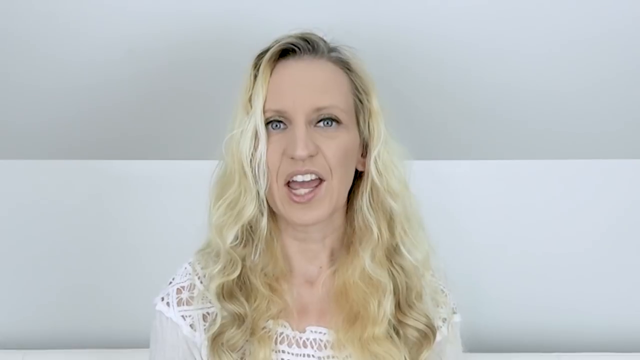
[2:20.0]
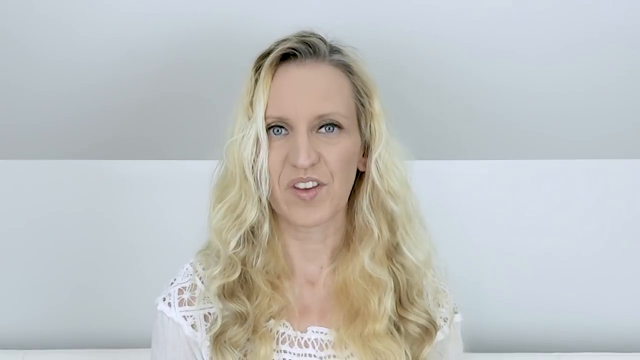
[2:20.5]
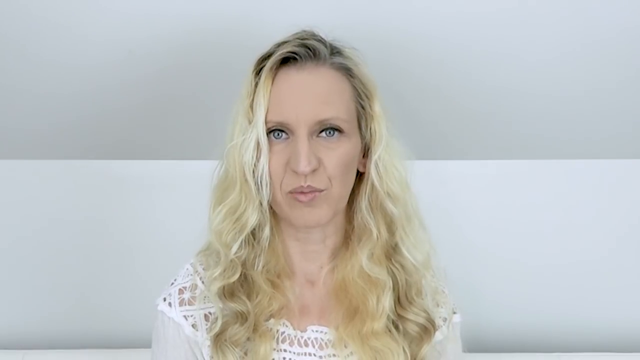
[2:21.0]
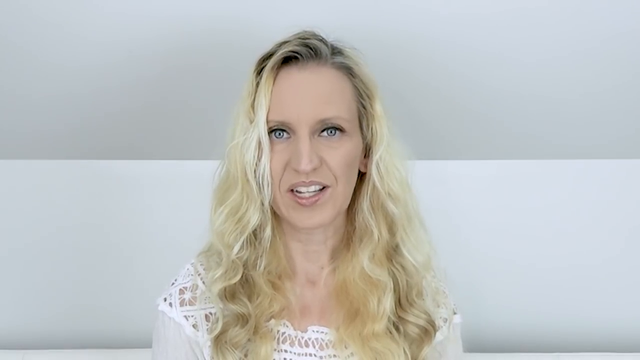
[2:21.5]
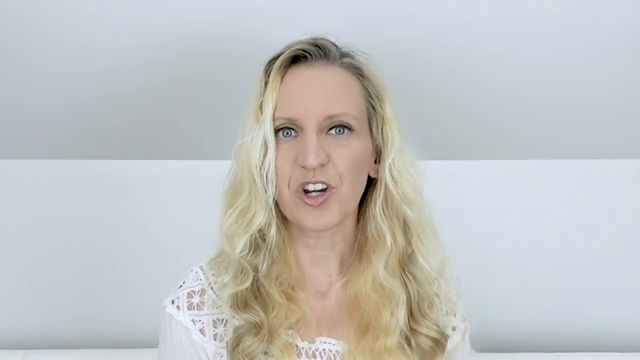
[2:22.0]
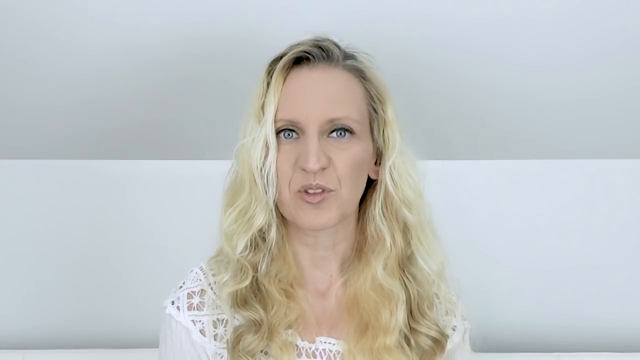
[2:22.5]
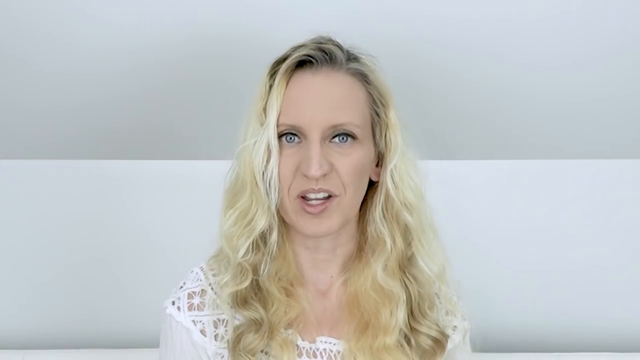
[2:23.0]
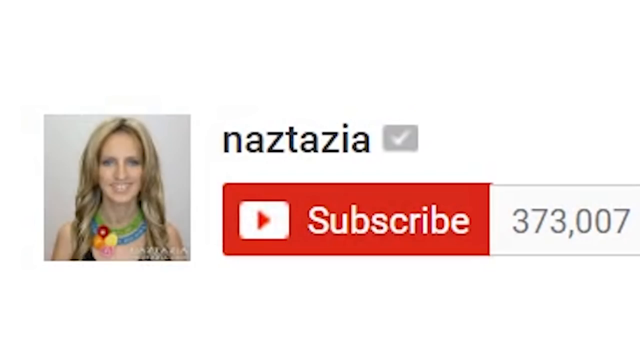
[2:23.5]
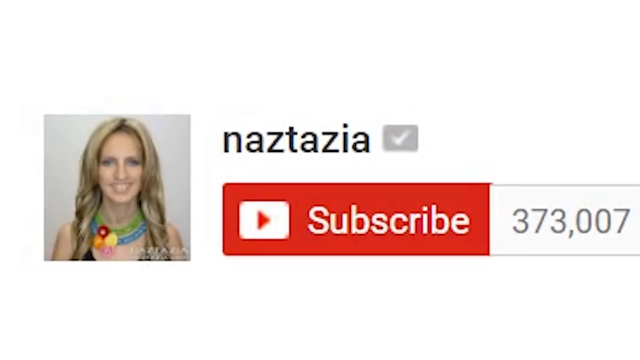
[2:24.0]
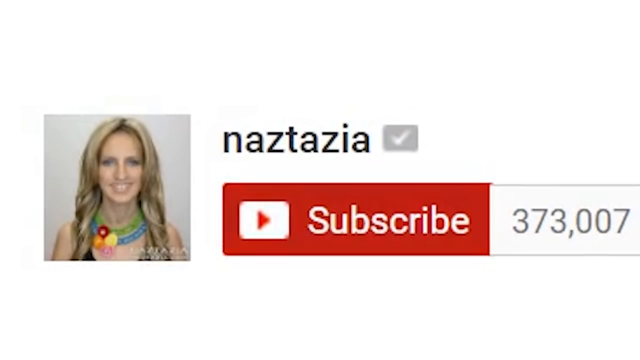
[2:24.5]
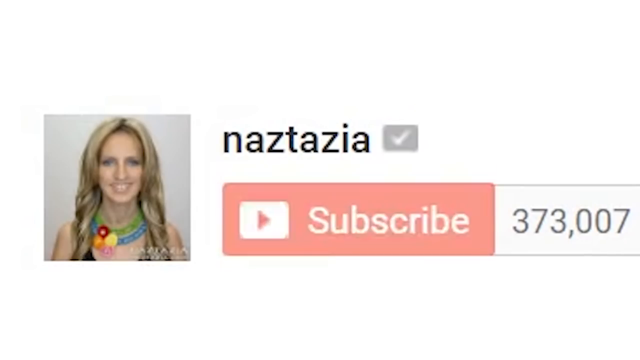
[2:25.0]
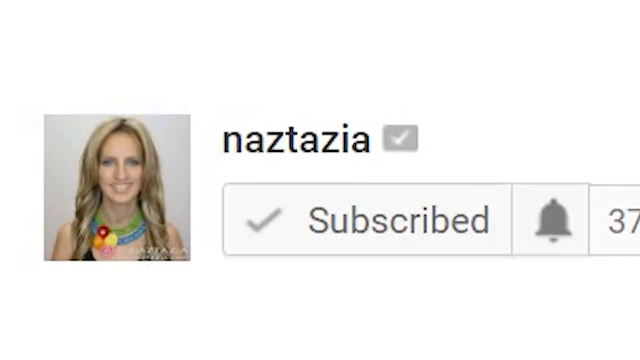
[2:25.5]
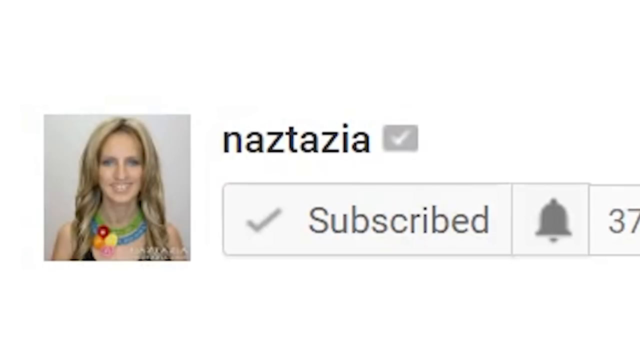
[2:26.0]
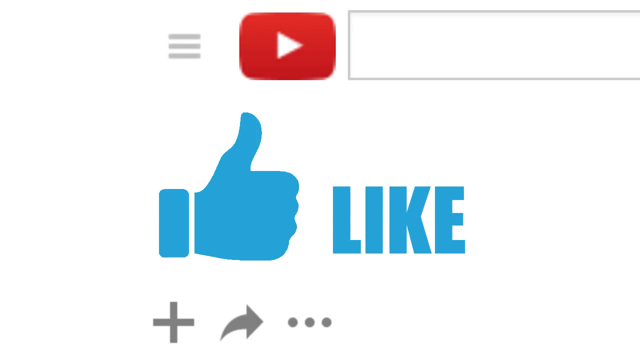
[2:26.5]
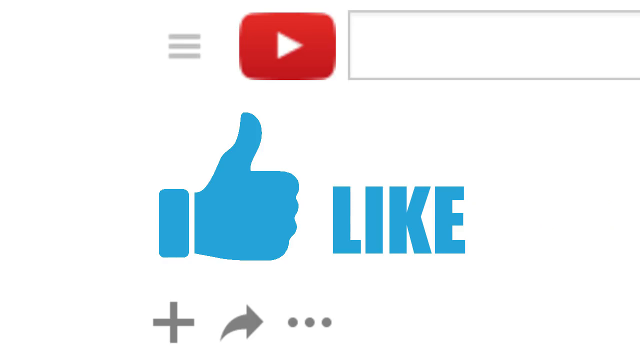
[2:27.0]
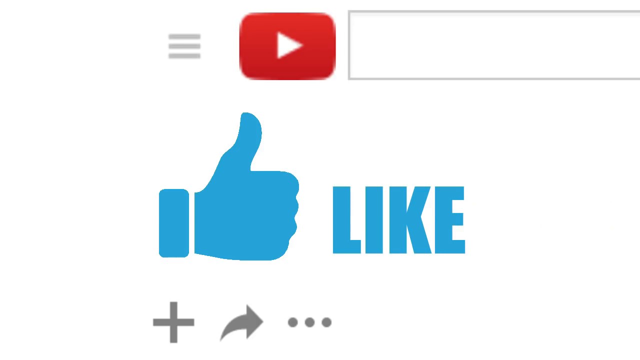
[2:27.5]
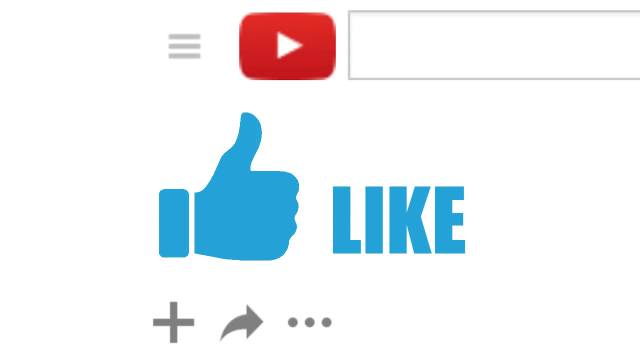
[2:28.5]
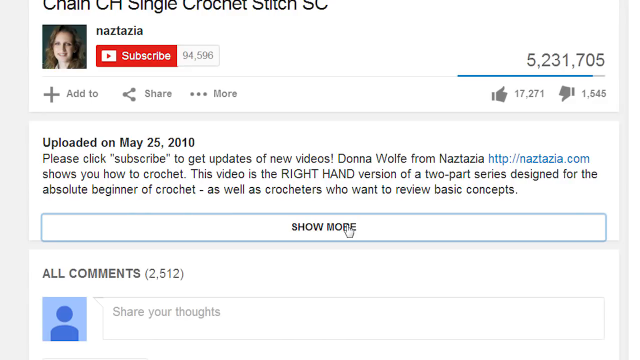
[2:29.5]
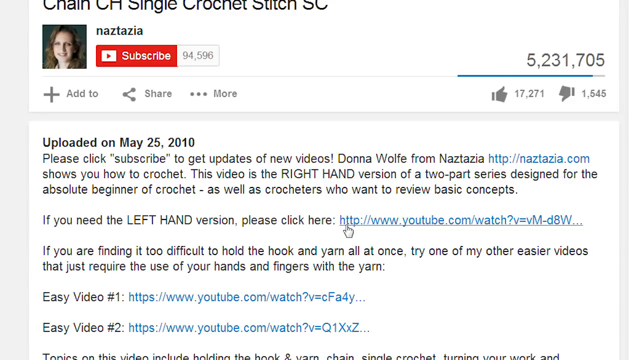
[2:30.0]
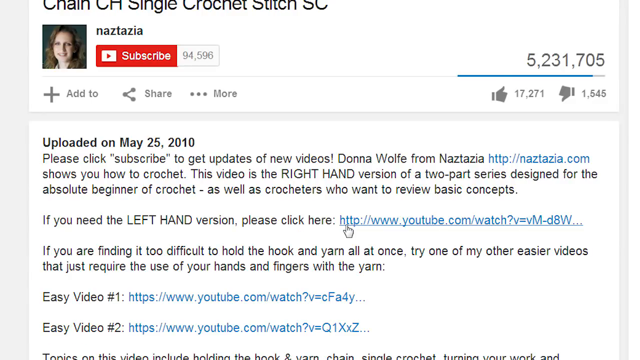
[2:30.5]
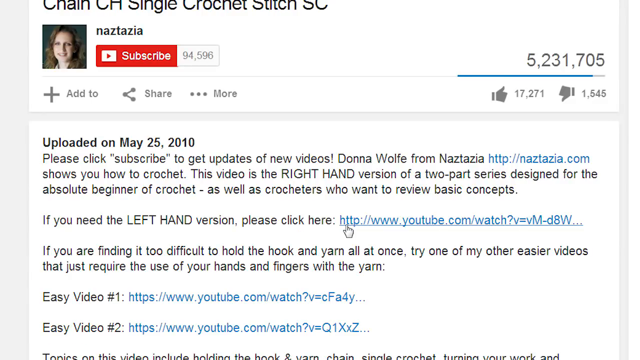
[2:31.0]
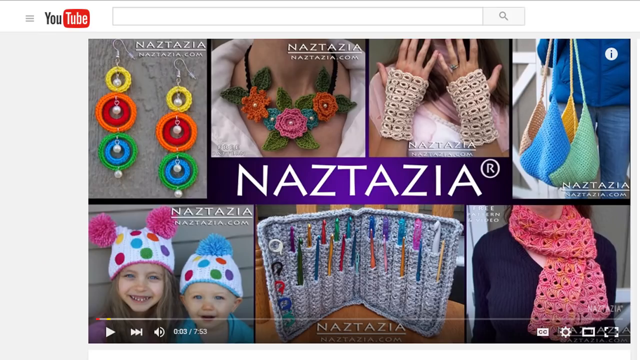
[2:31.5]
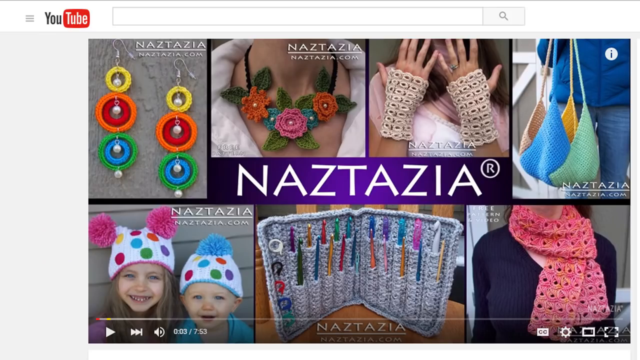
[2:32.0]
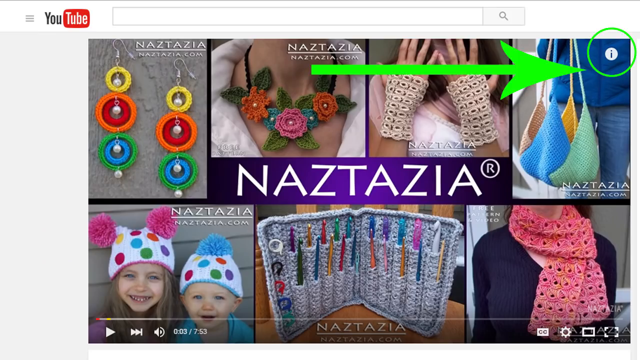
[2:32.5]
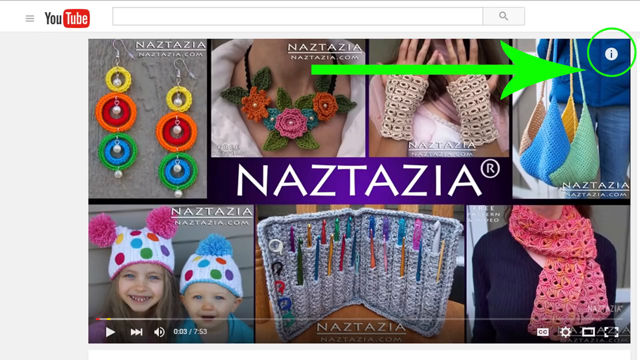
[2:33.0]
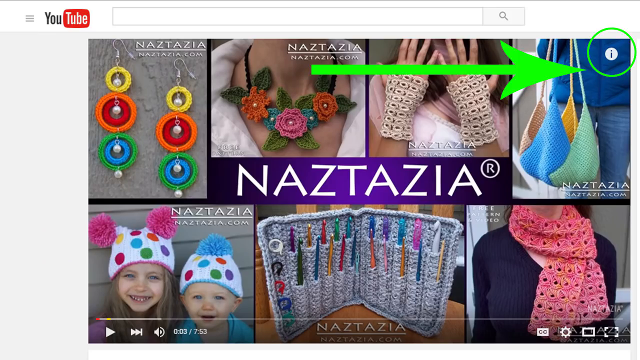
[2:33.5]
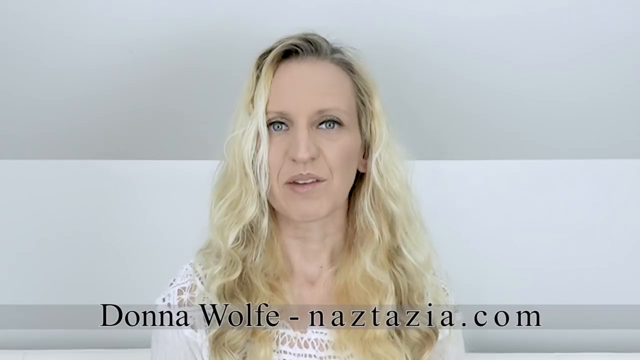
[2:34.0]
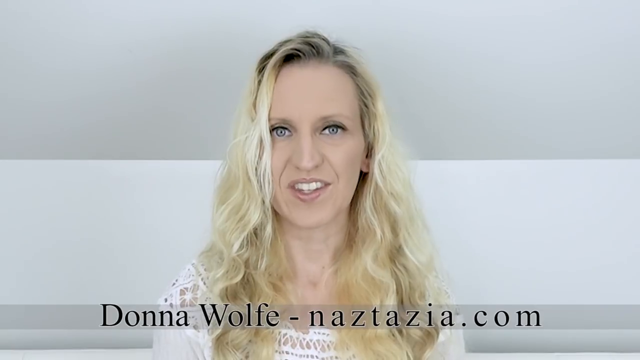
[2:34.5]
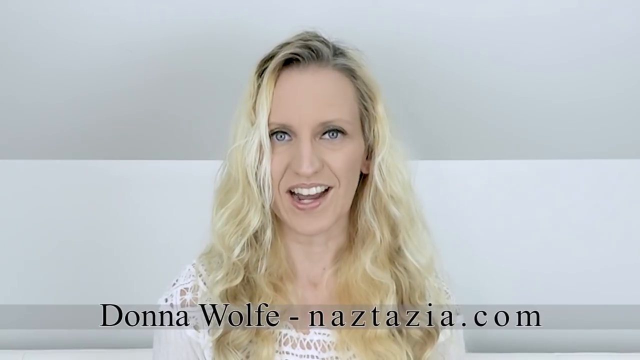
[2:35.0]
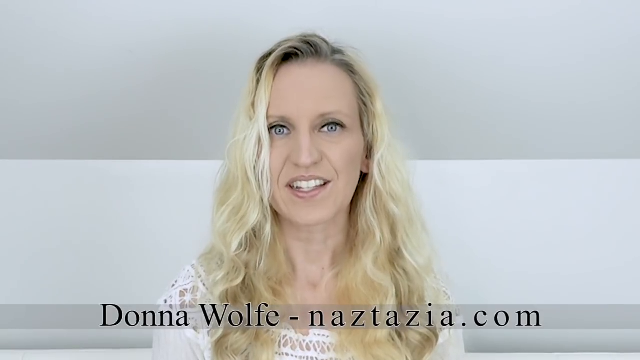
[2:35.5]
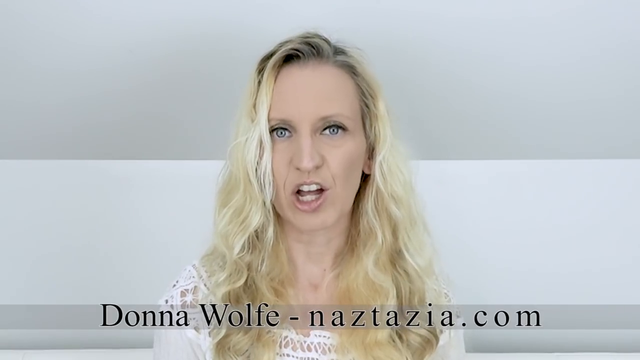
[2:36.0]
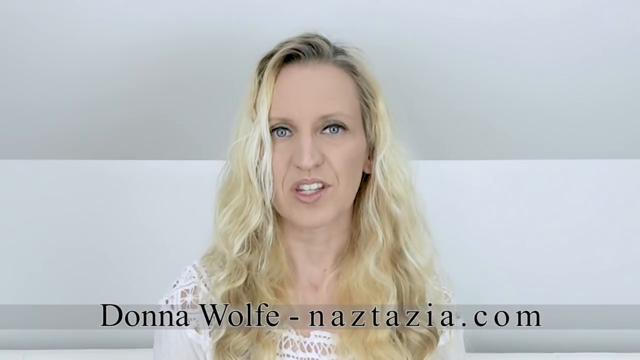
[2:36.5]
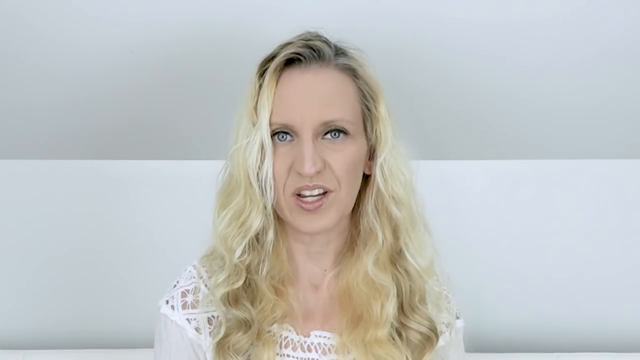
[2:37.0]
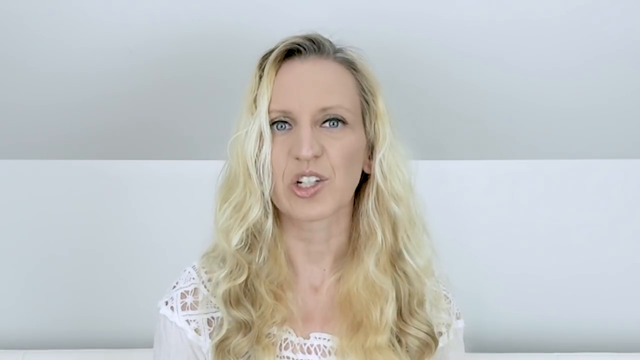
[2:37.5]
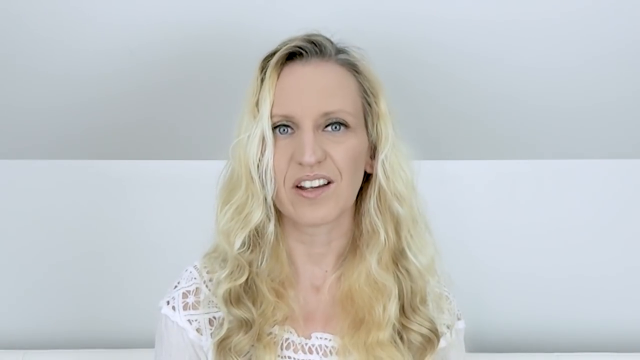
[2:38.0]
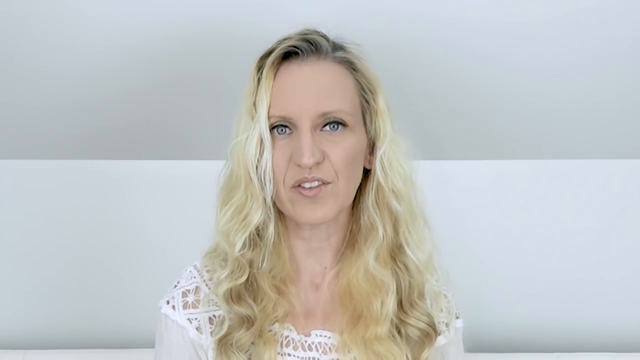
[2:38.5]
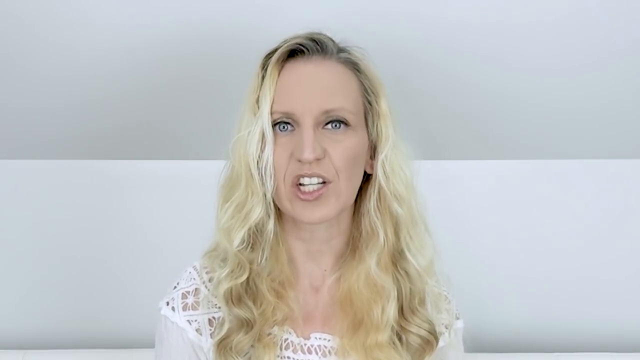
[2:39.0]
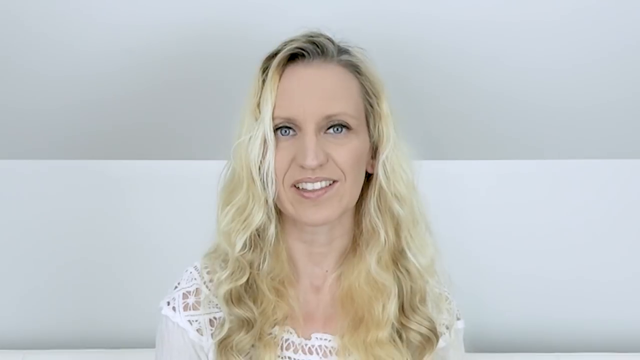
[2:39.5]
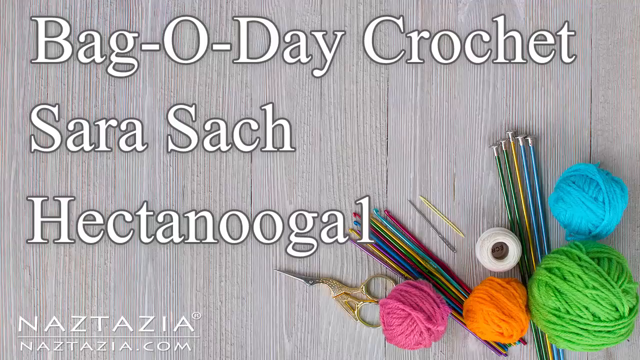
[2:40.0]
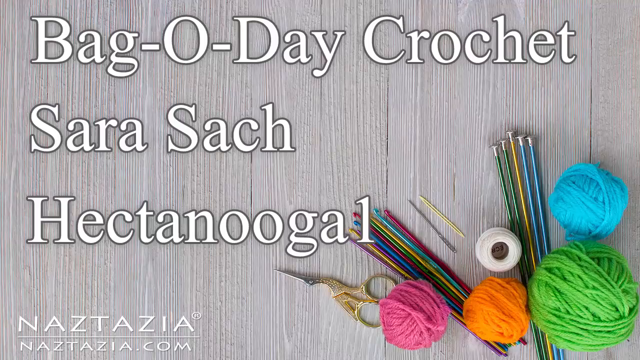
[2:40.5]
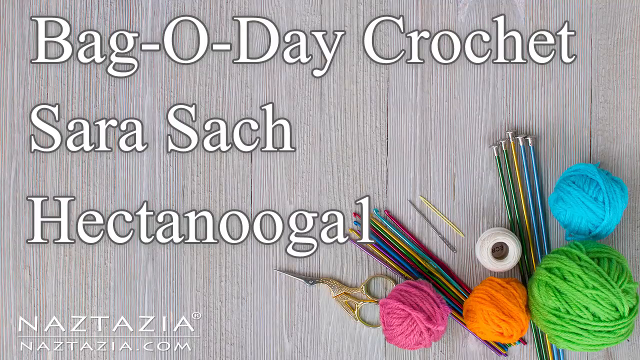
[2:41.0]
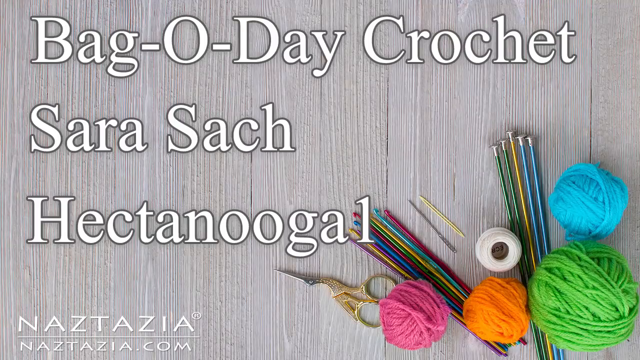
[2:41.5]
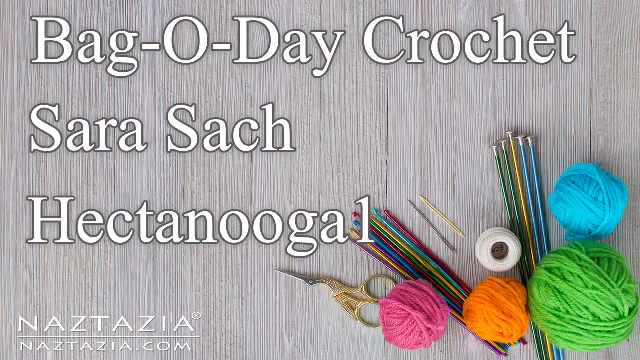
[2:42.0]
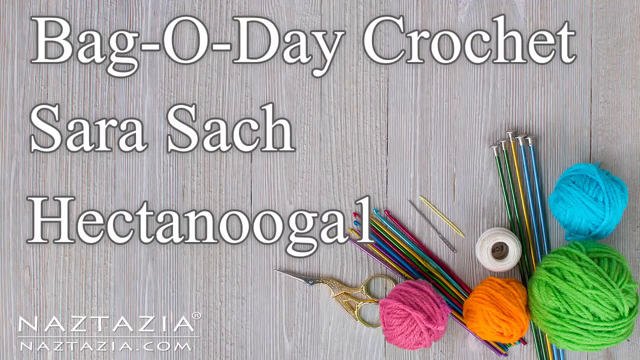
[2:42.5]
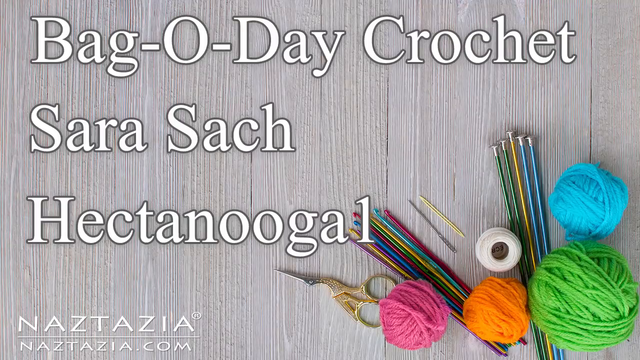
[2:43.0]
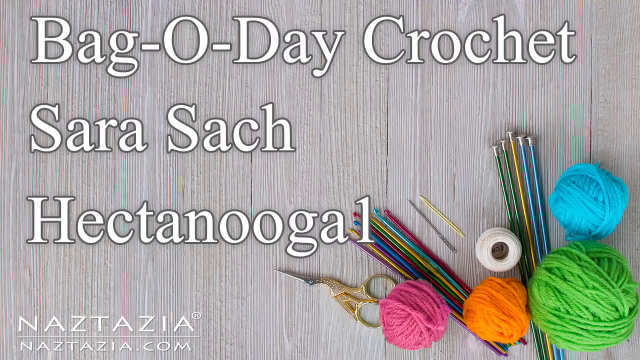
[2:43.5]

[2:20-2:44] The blonde-haired woman in the white room talks directly to the camera. The next screen shows her YouTube channel, and the subscribe button is suddenly clicked; the channel appears to have 373,000 subscribers. On the left-hand side of the screen is a photo of her that almost looks like a passport picture, but she is smiling and wearing crochet necklaces with flowers attached around her neck. A Facebook like thumbs-up is shown, then her YouTube channel briefly appears, apparently with a chain single crochet stitch tutorial and a left-hand version in the description. Again her banner screen with the crocheted accessories appears, with the eye symbol in the top right-hand corner circled in green and a large green arrow pointing to it. The woman in the white room is shown, and then the floorboard image returns with the captions "Bargo Day Crochet, Sara sac and Hectanoogl".